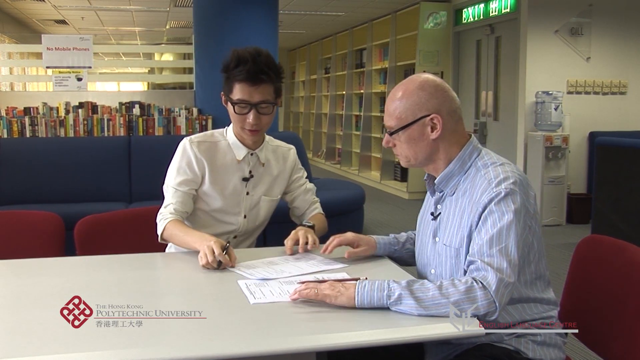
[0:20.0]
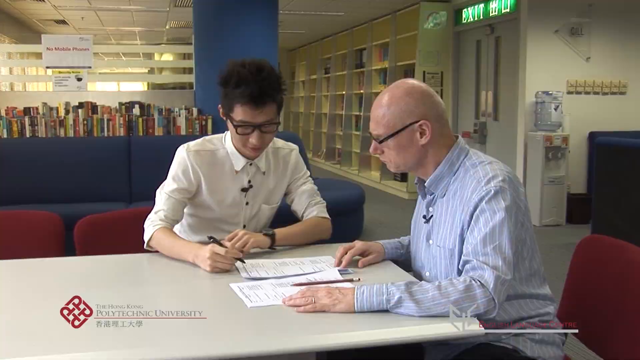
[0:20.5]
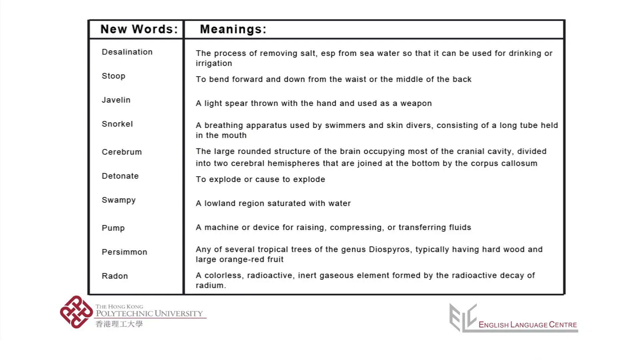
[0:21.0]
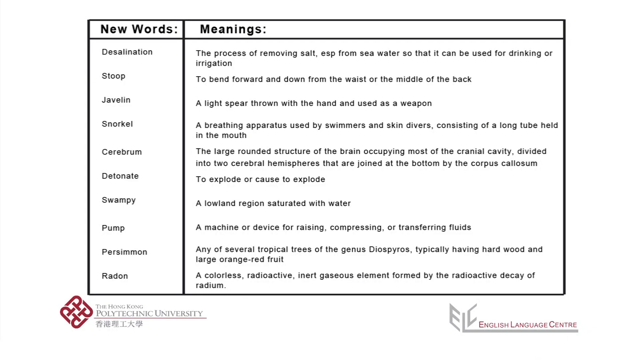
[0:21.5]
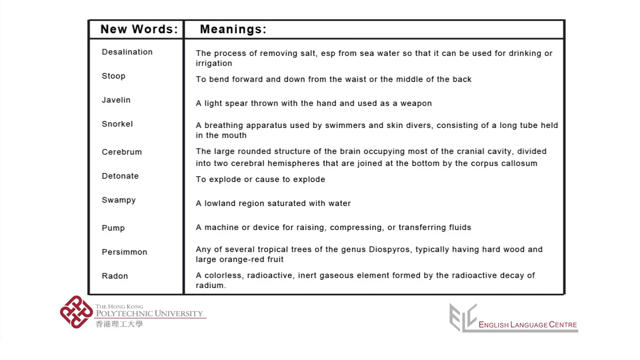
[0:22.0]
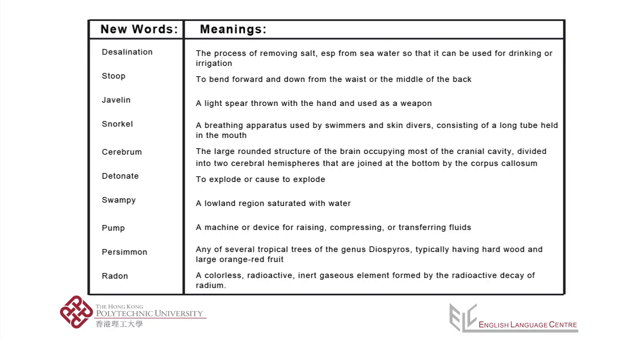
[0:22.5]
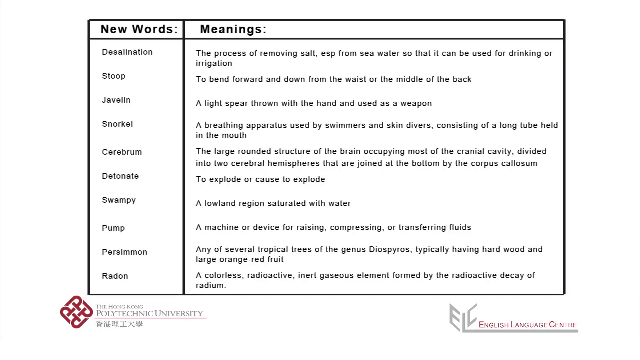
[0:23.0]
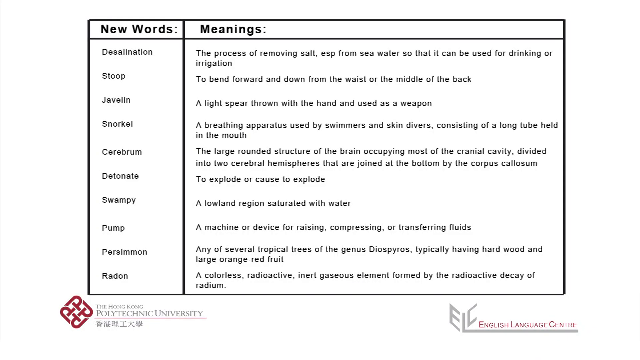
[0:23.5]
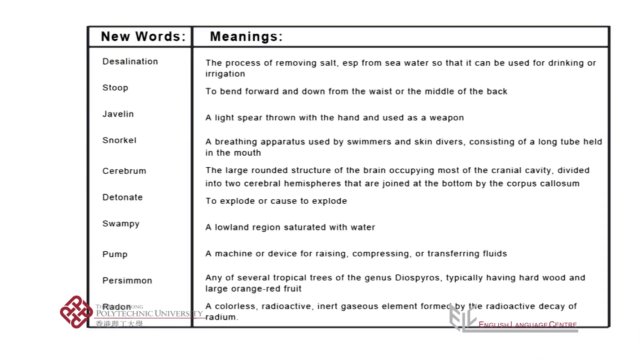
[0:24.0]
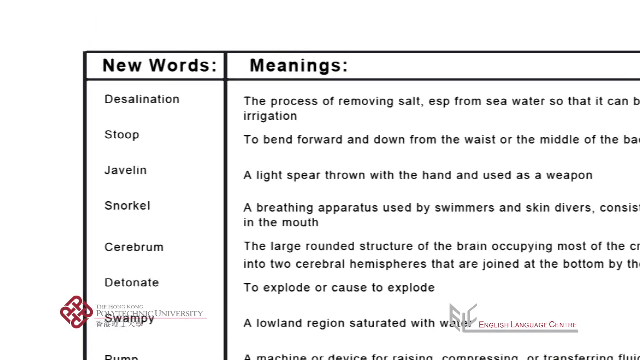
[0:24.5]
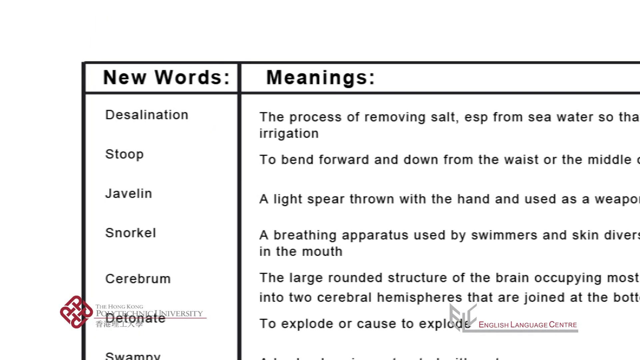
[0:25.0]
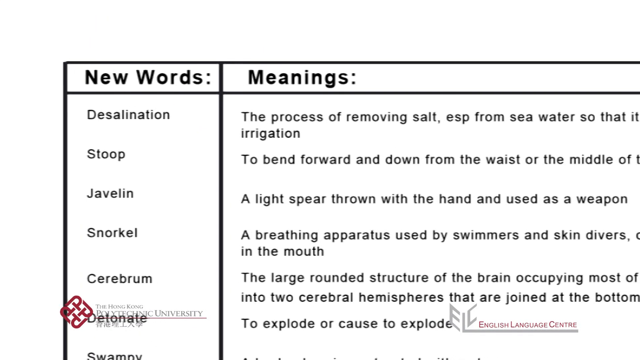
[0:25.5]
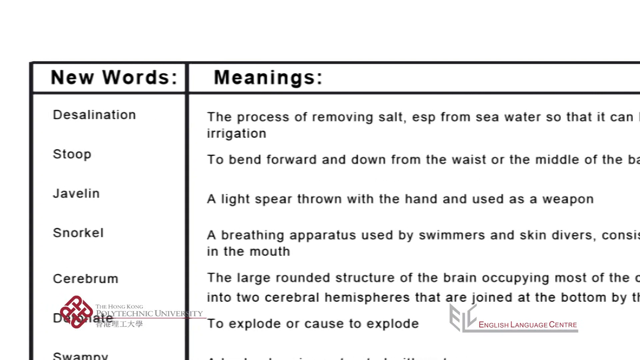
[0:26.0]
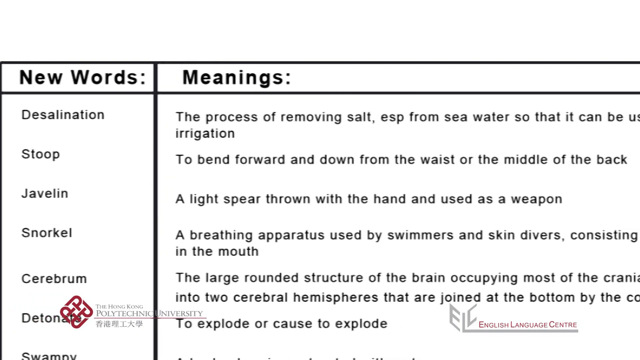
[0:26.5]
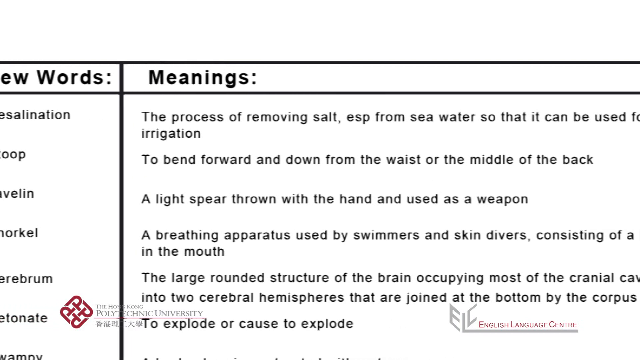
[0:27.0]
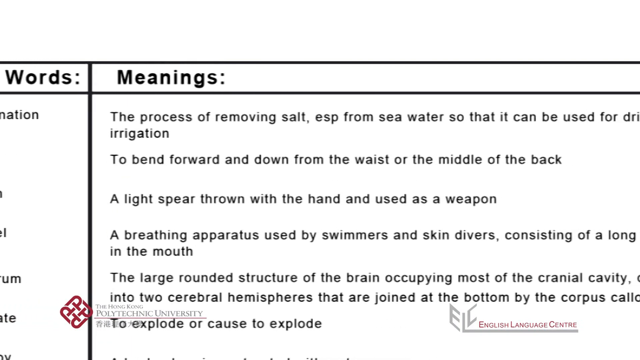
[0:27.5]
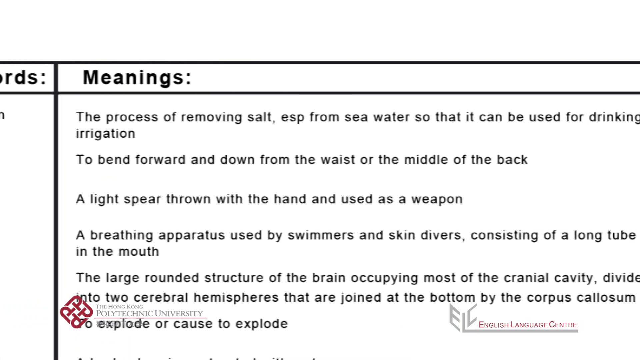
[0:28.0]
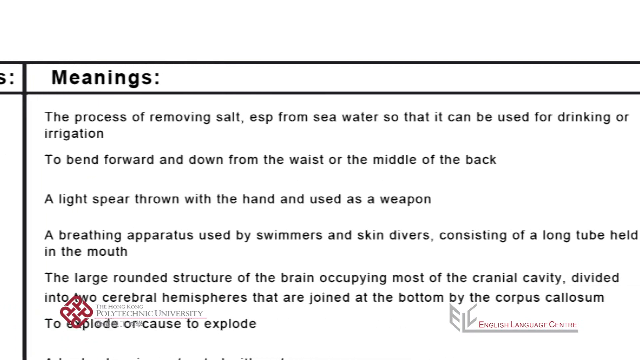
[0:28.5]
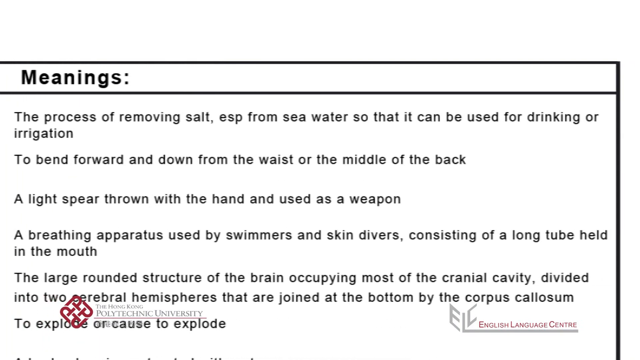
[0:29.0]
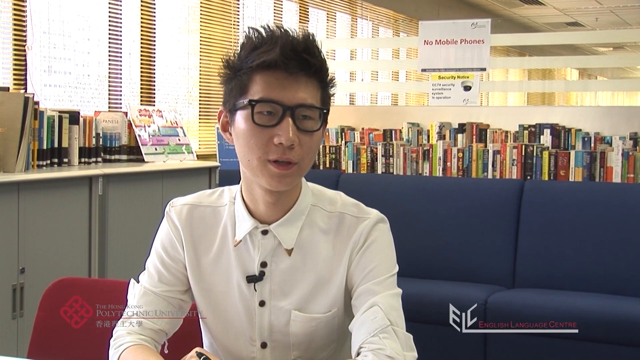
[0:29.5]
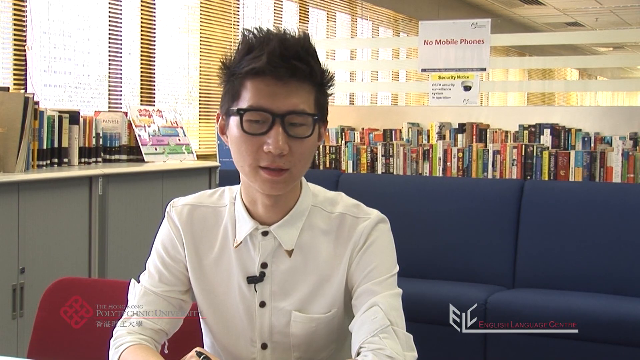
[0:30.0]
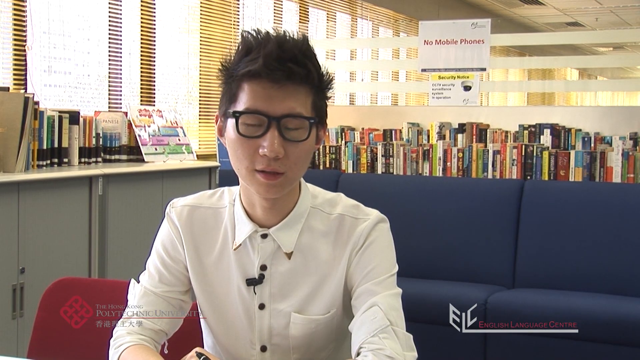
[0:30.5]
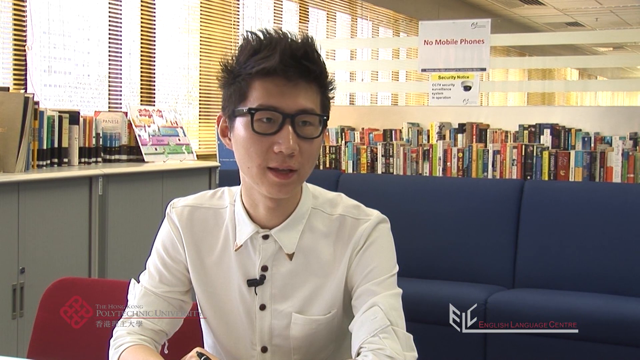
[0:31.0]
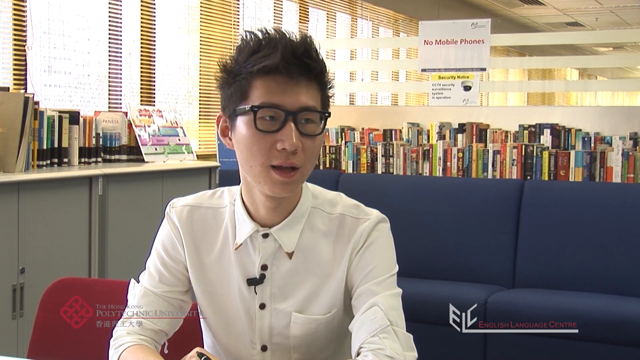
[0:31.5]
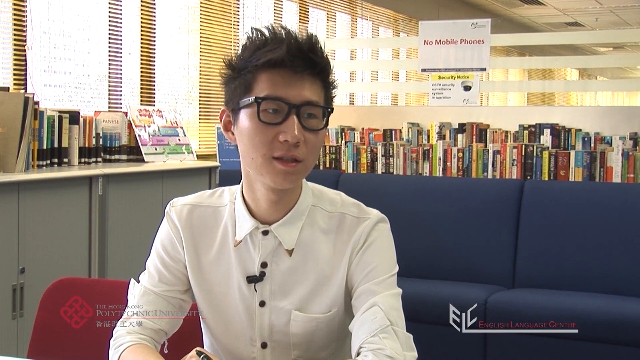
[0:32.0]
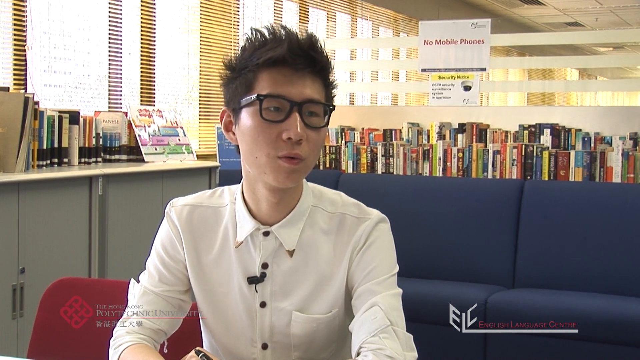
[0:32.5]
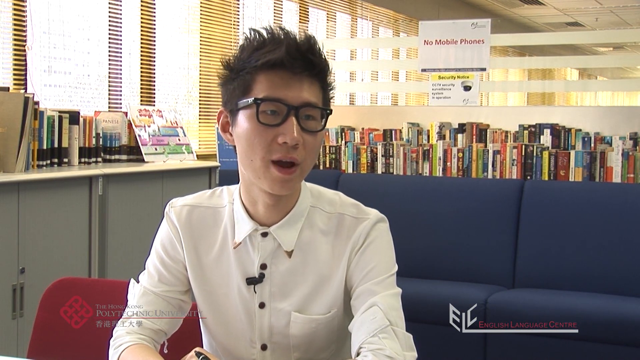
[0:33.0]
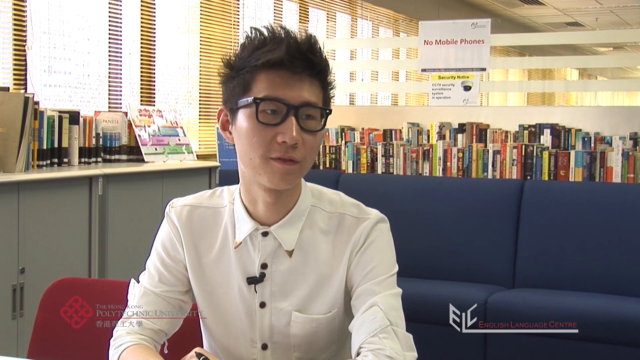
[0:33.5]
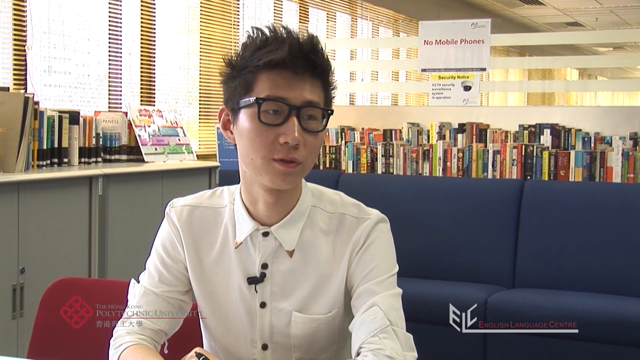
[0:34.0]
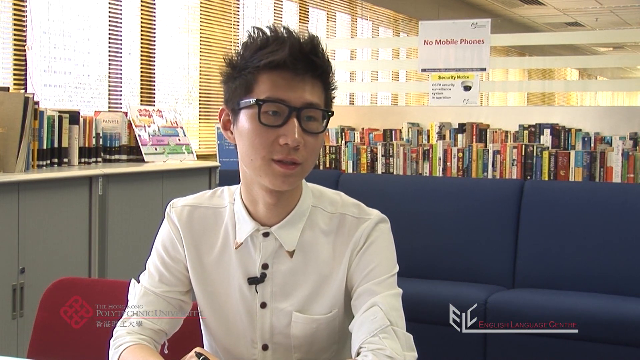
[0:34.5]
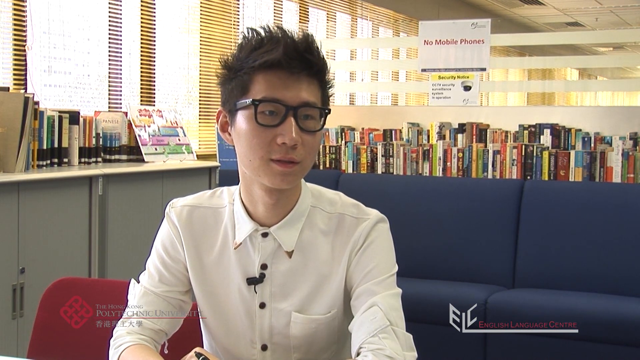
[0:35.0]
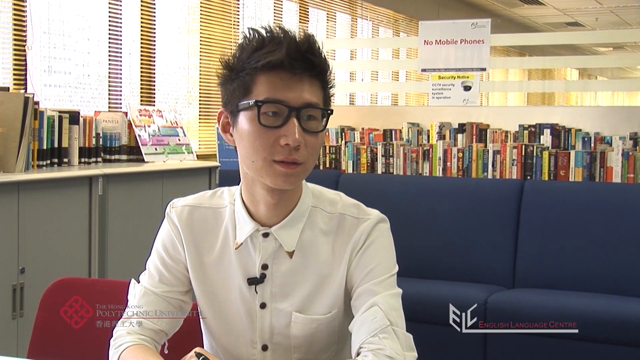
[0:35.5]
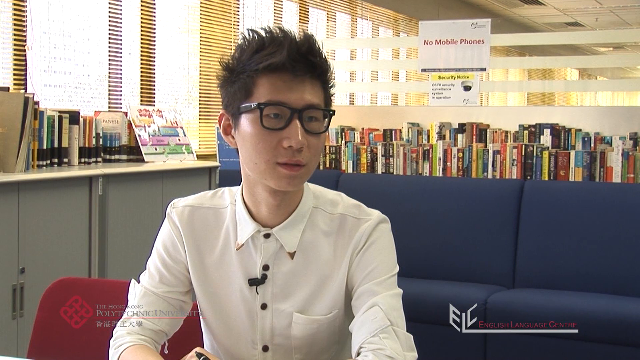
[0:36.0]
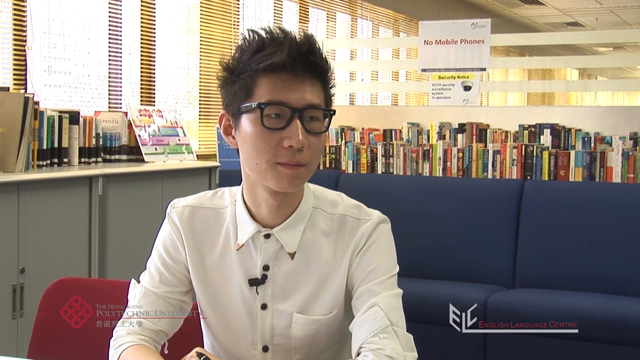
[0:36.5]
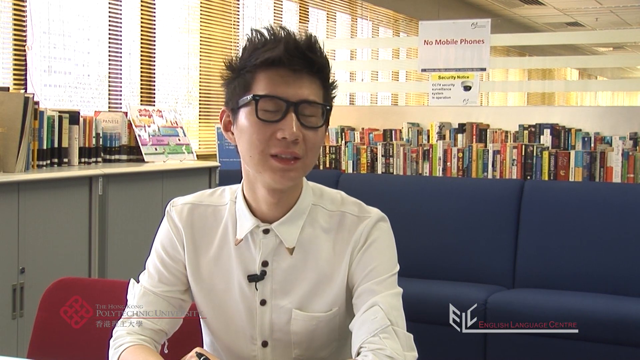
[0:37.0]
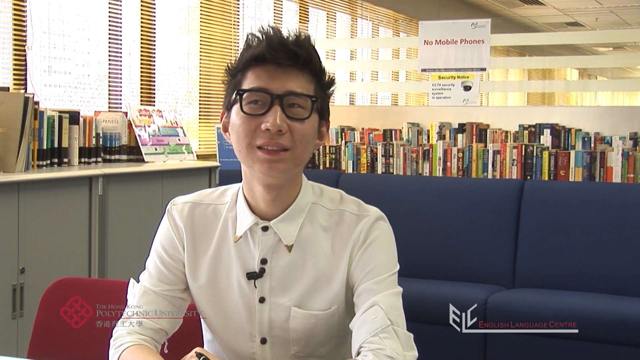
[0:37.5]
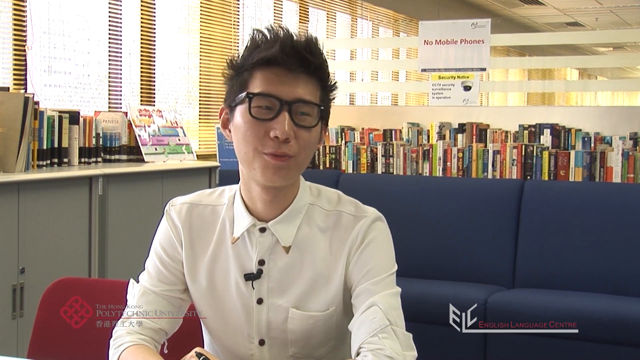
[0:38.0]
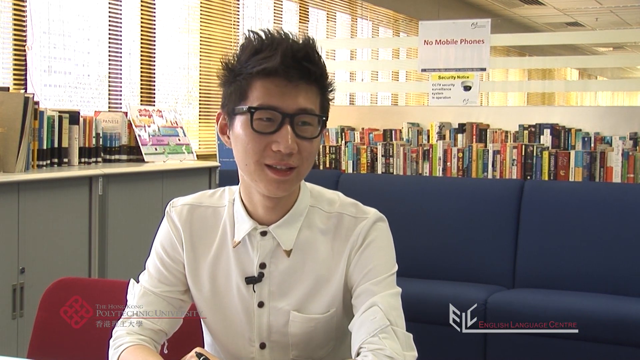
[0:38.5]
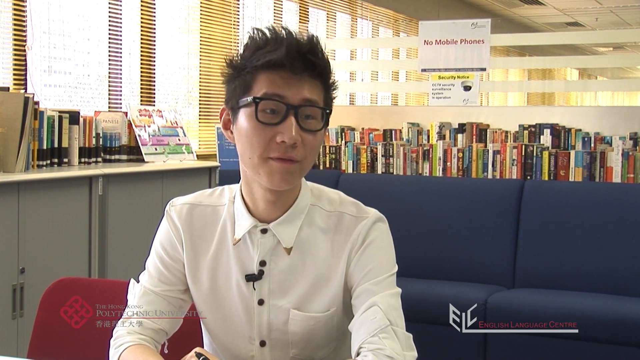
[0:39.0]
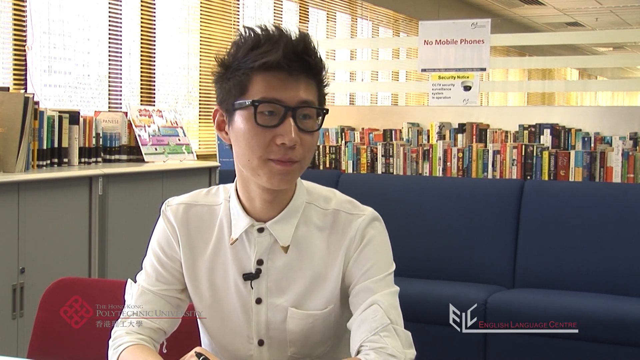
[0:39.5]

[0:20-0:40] In a library, two males are sitting at a rectangular table. In the lower left corner is the text "the Hong Kong Polytechnic University" with the university's logo on the left. The man on the right wears a long-sleeved blue and white shirt, buttoned up with the top button undone. The male on the left is a college student in a white shirt rolled up to the elbows, holding a pen in his right hand and wearing a black watch on his left wrist. Both men wear glasses. Bookshelves with lots of books are in the background, and on the right side is a water fountain with a five-gallon water container sitting on top and two spigots below. The student holds a paper and shows it to the professor, and then an image of the paper appears, reading "new words and their meanings." A list of new words runs down the left: desalination, stoop, javelin, snorkel, cerebrum, detonate, swampy, pump, persimmon, radon, with a column of meanings on the right. The video focuses on the new words and then on their meanings. It then switches to the young student talking, with a blue couch, books on shelves, and partly opened blinds behind him. The student looks down, then looks at the professor and talks to him, pauses, and replies again.